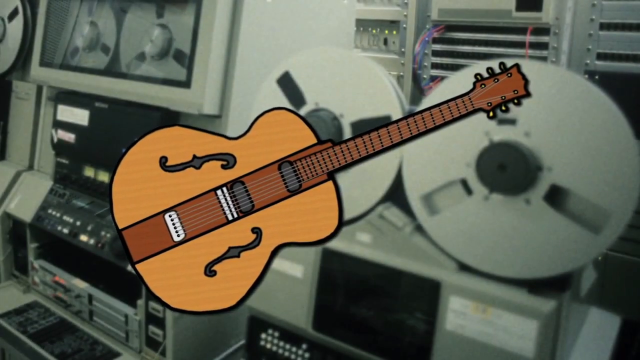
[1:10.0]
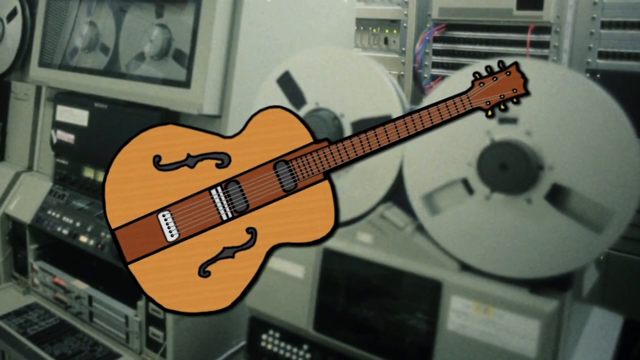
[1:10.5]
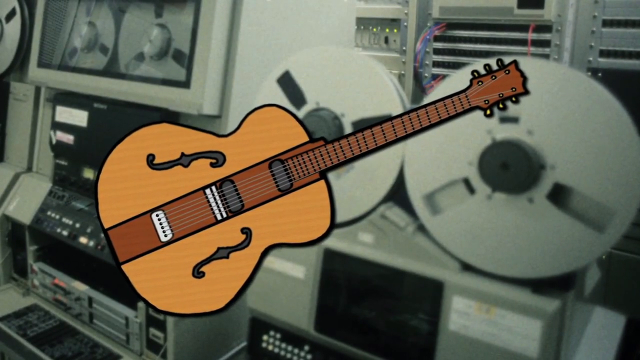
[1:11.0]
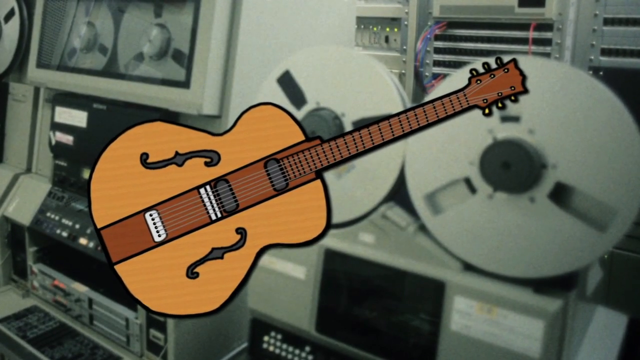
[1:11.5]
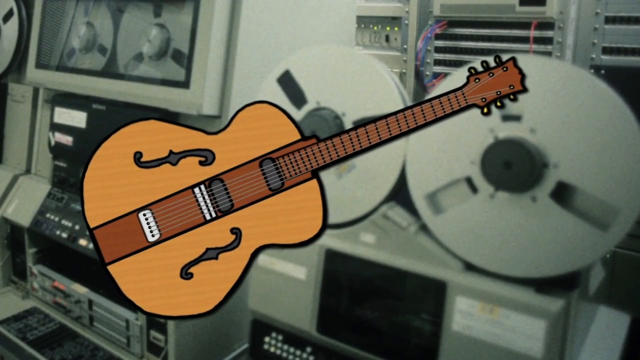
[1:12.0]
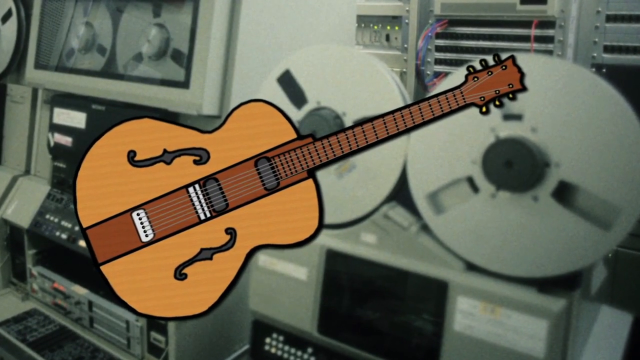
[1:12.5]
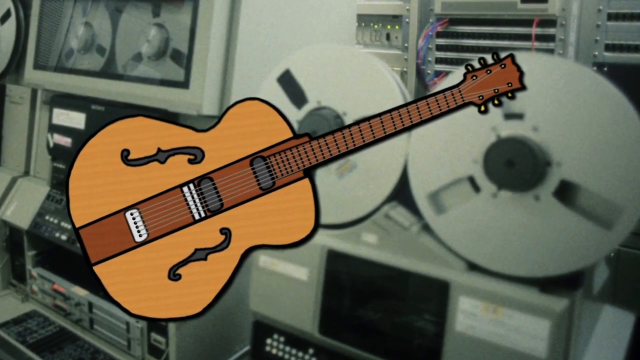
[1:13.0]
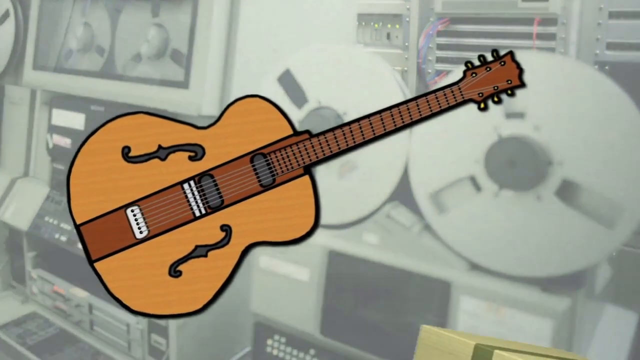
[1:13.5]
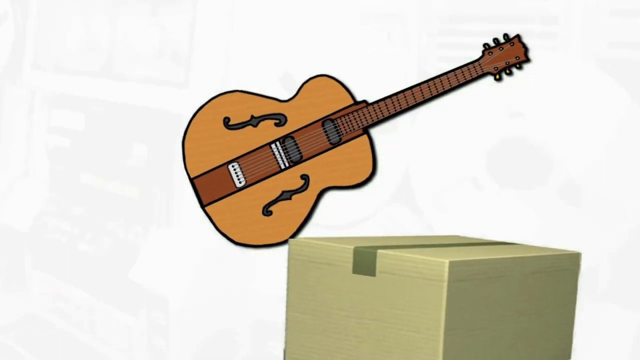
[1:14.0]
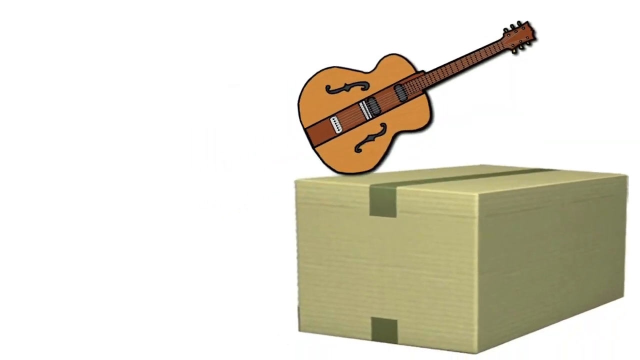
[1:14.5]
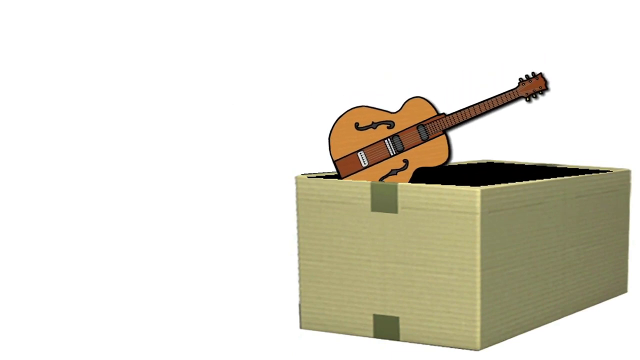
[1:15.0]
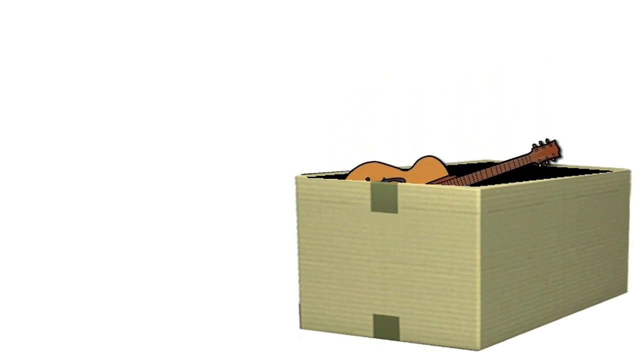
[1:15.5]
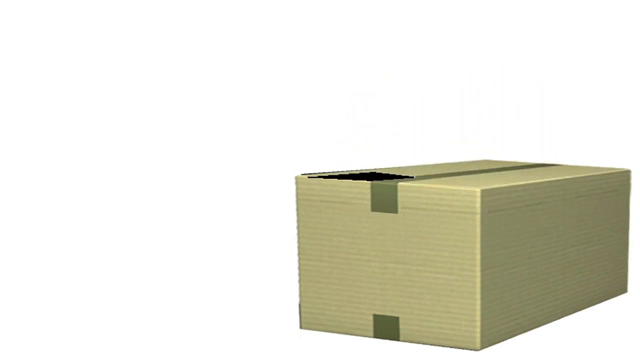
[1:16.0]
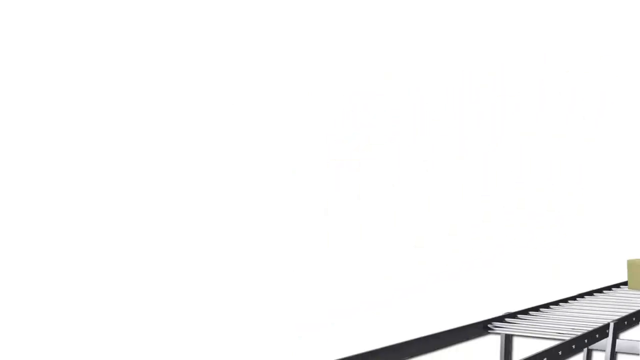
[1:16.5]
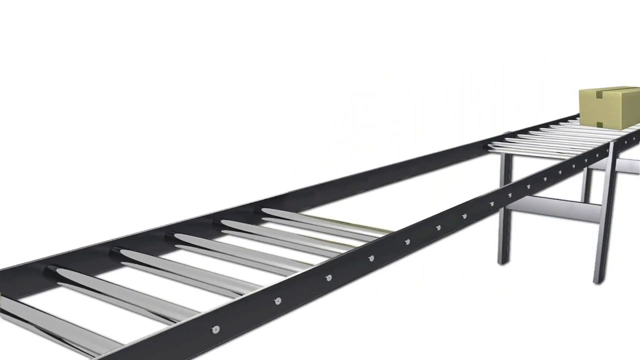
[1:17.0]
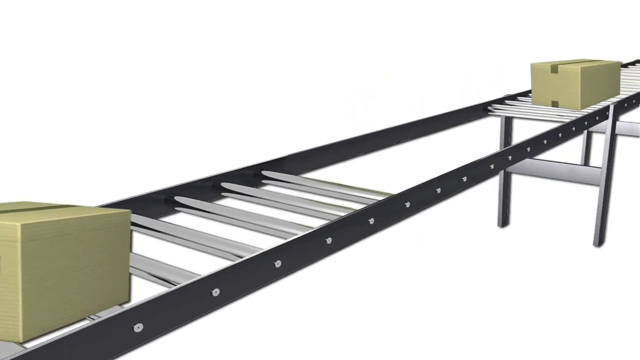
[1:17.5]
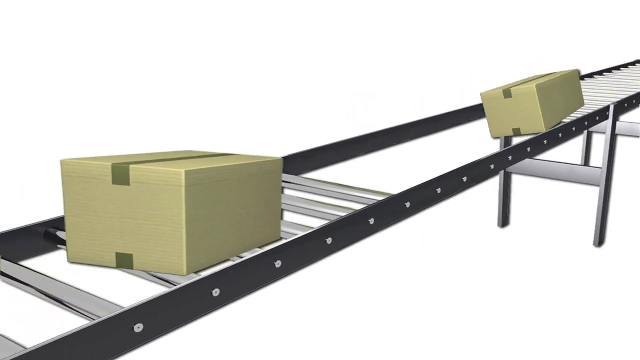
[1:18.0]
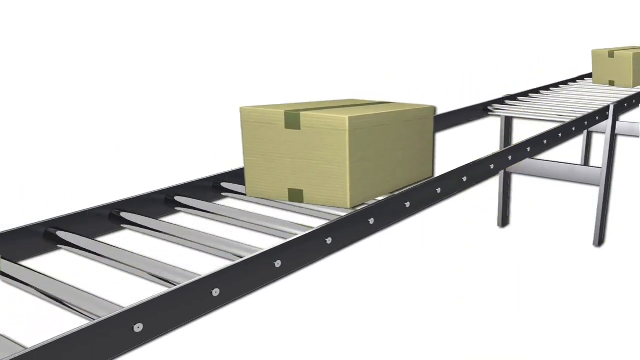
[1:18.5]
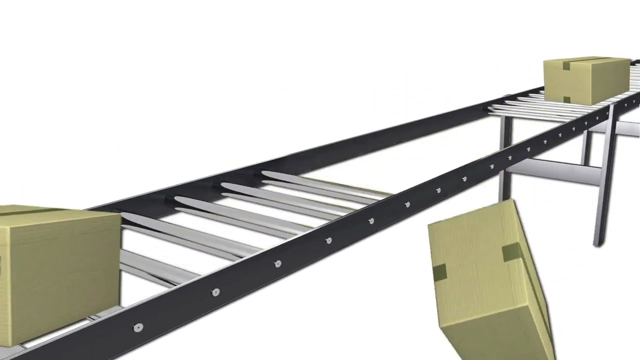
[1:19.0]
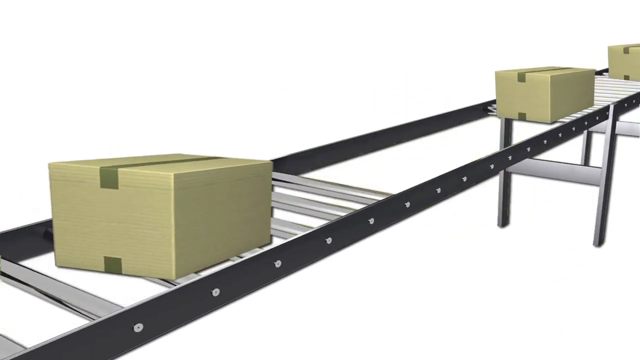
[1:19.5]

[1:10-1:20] An animated brown electric guitar is in the foreground, with a recording studio that looks very old and black and white in the background. The guitar seems to move forward towards the screen, getting bigger and bigger, then gets smaller and moves to the top right as the background changes to completely white. A large cardboard box appears from the bottom right, the guitar appears to move inside the box, and the box closes starting from the top right. The package moves on a conveyor belt that slides up from the bottom to the middle of the screen.